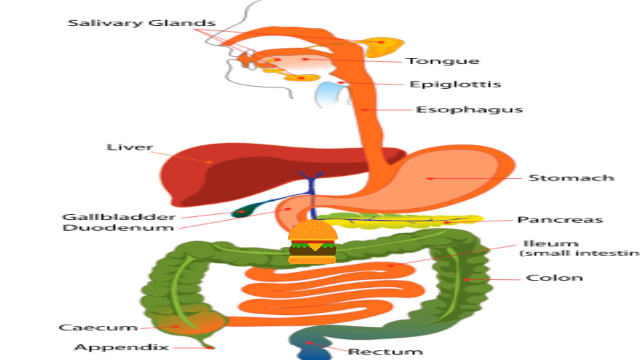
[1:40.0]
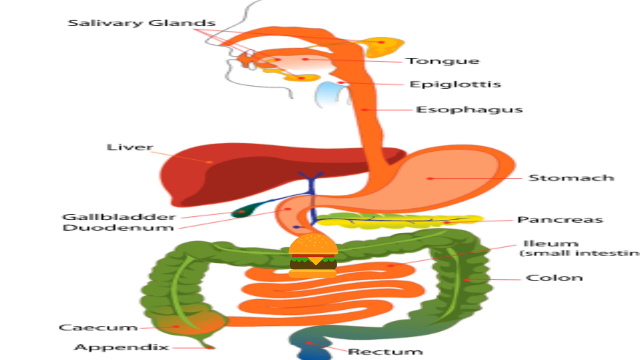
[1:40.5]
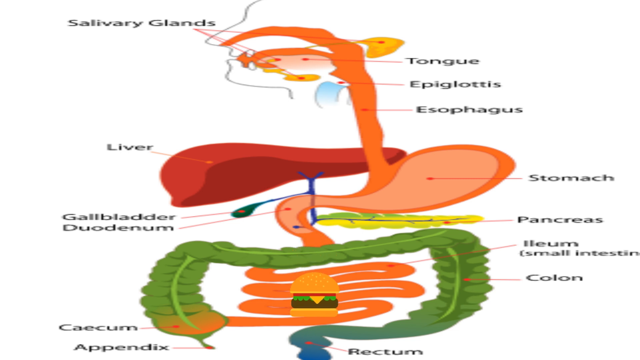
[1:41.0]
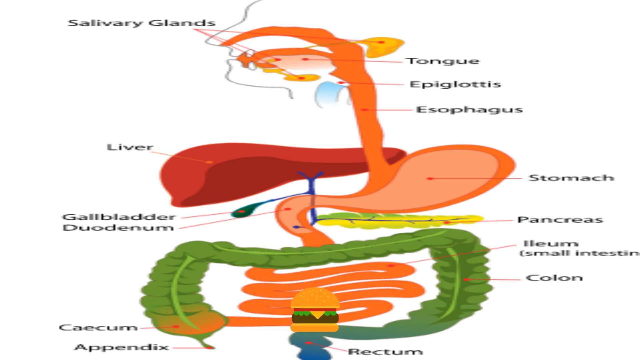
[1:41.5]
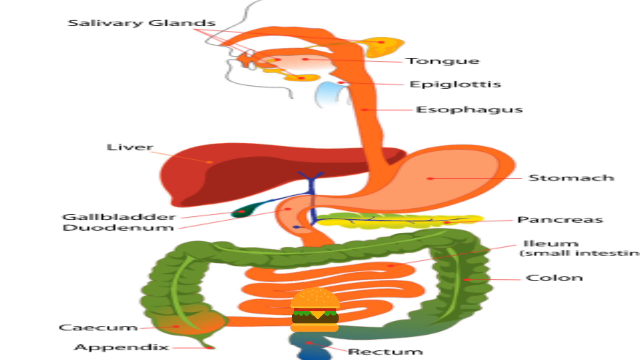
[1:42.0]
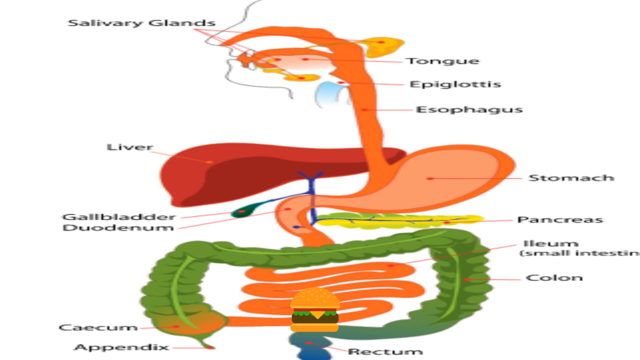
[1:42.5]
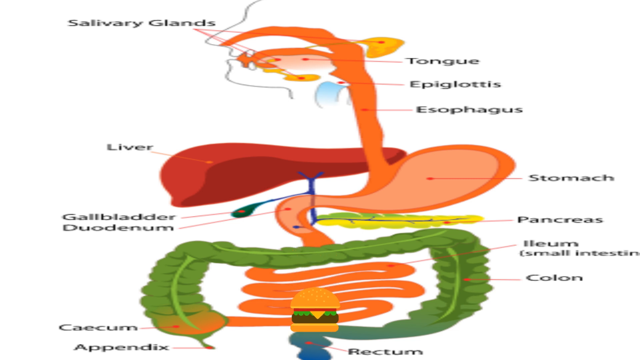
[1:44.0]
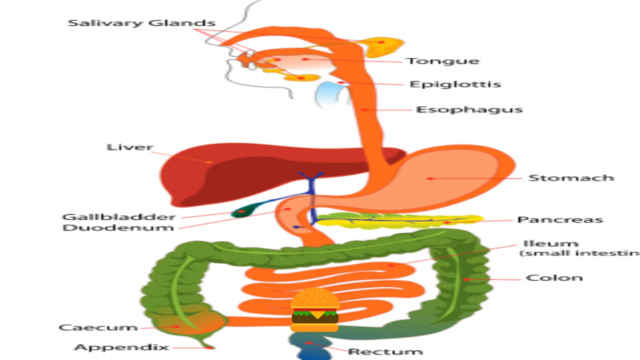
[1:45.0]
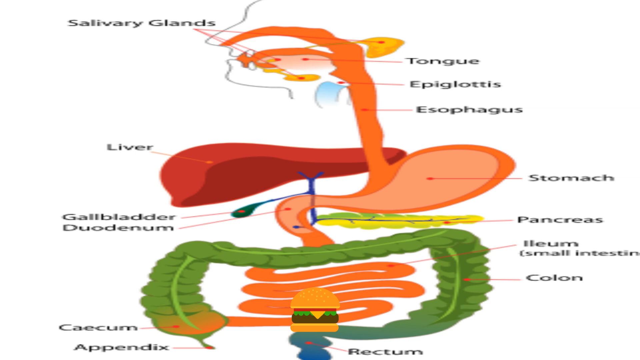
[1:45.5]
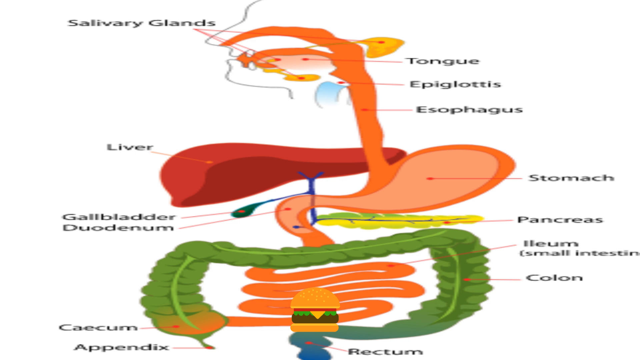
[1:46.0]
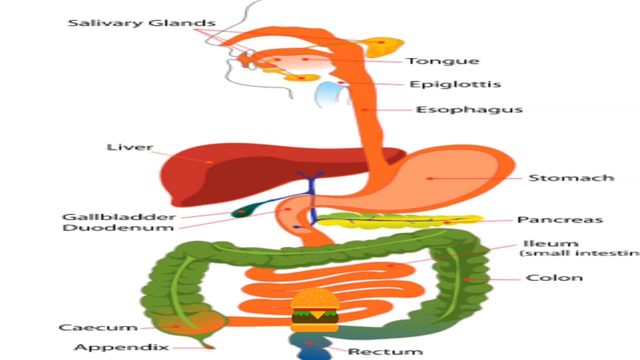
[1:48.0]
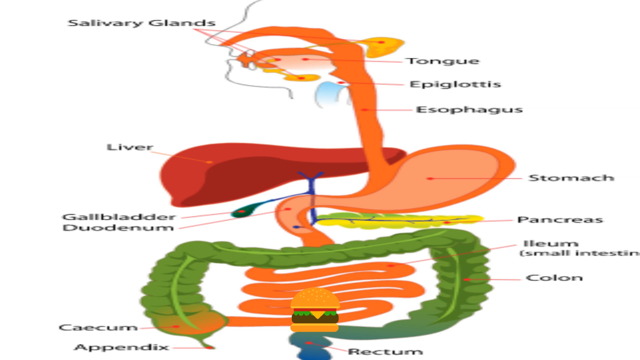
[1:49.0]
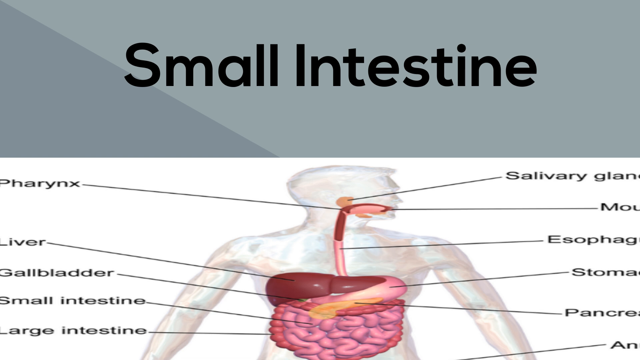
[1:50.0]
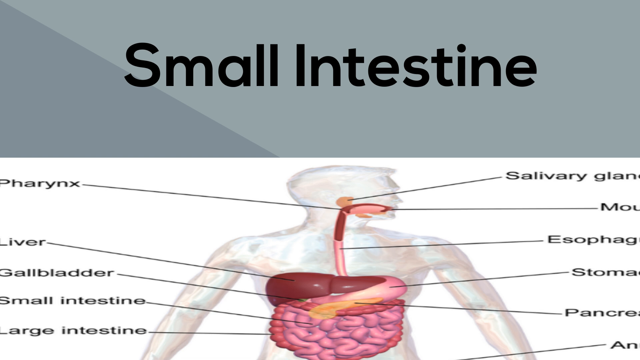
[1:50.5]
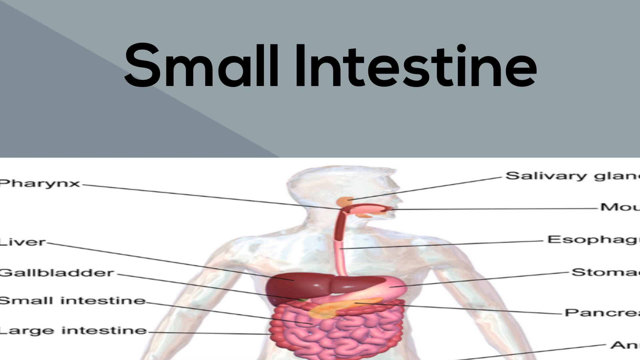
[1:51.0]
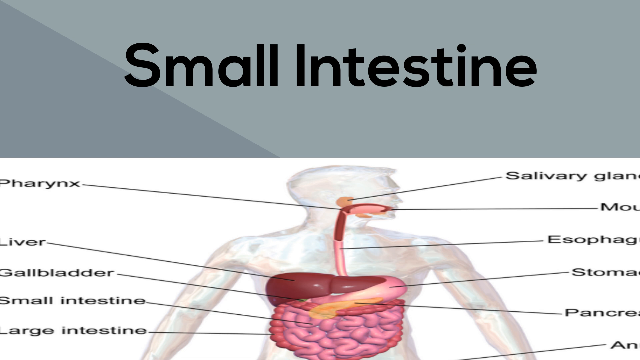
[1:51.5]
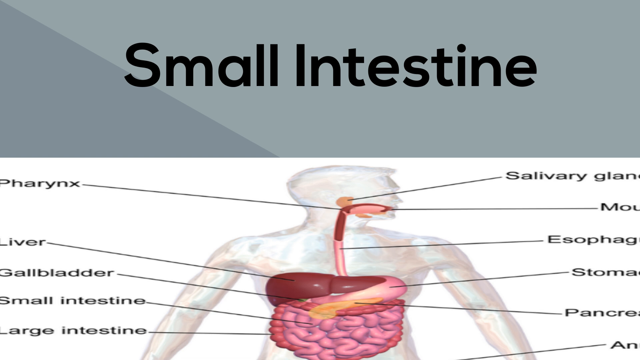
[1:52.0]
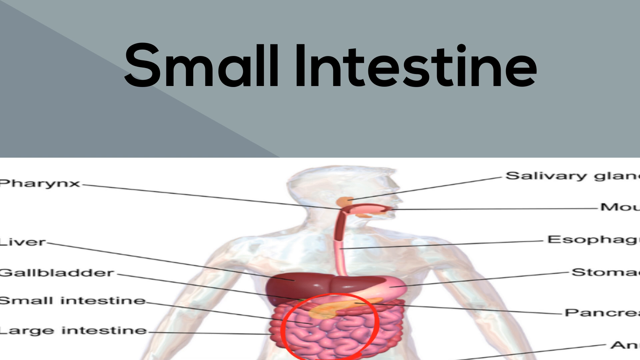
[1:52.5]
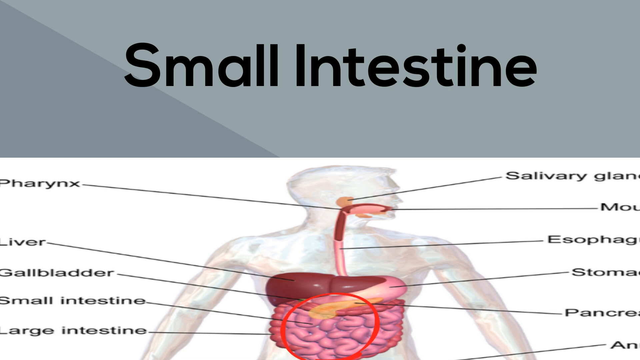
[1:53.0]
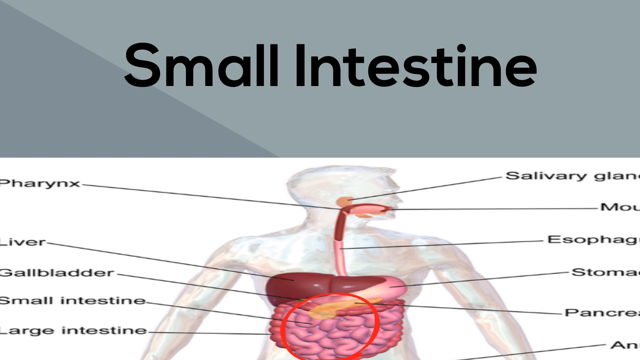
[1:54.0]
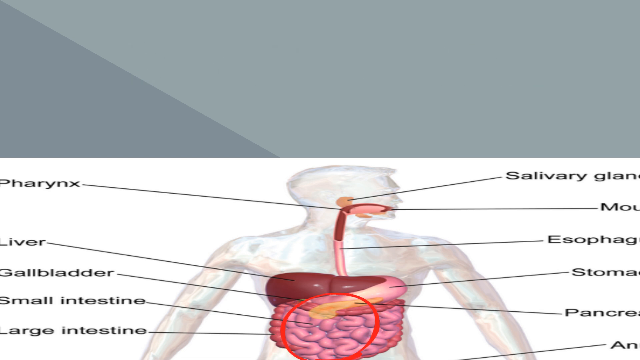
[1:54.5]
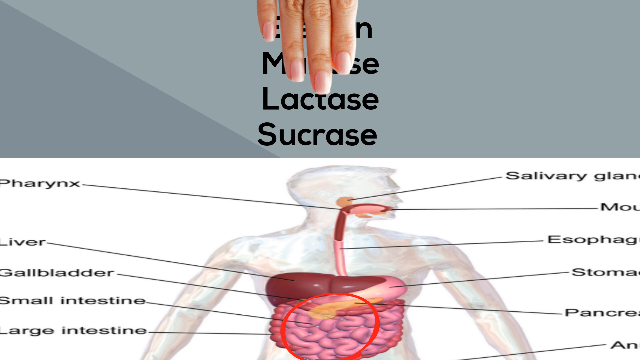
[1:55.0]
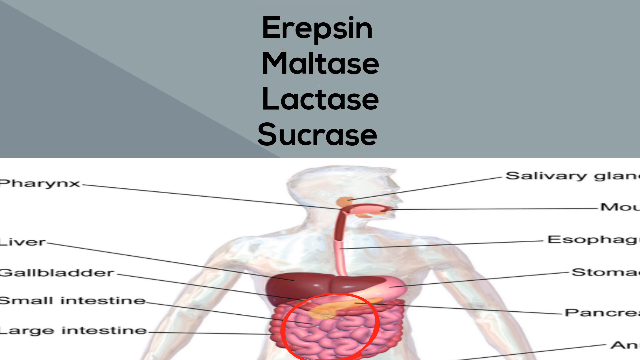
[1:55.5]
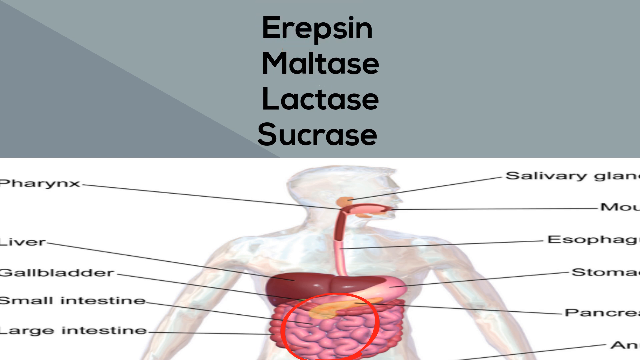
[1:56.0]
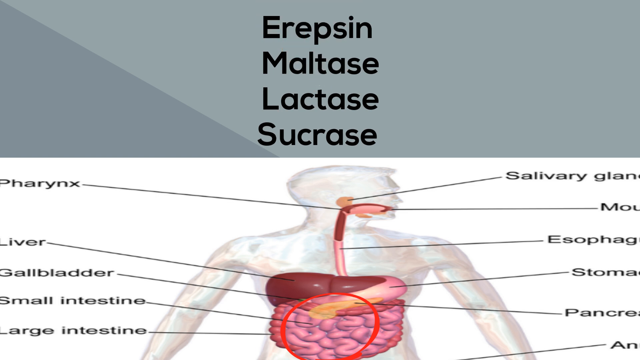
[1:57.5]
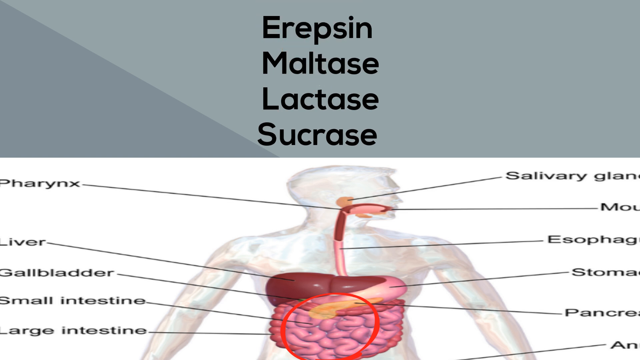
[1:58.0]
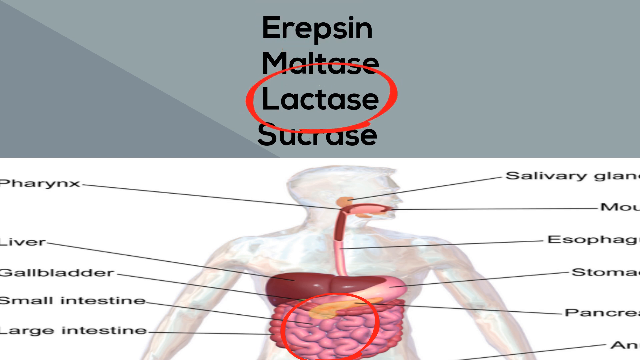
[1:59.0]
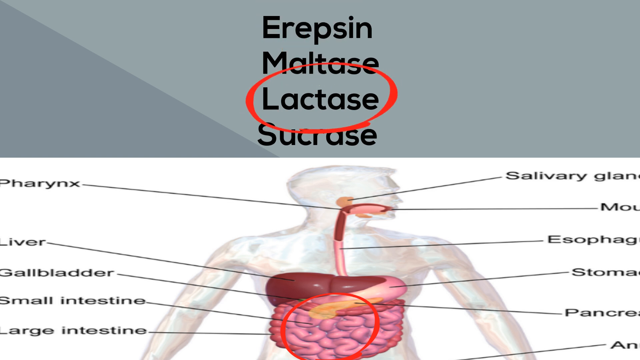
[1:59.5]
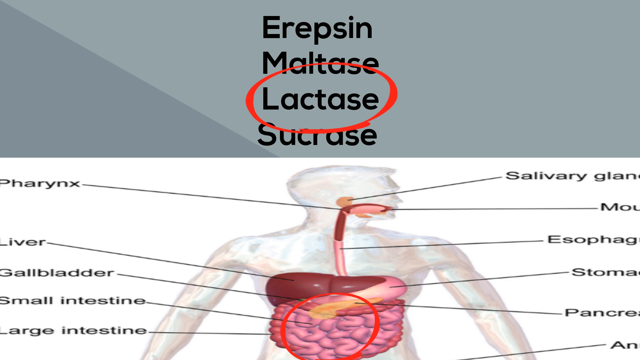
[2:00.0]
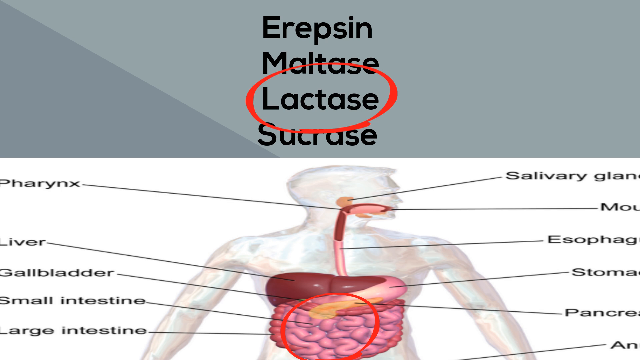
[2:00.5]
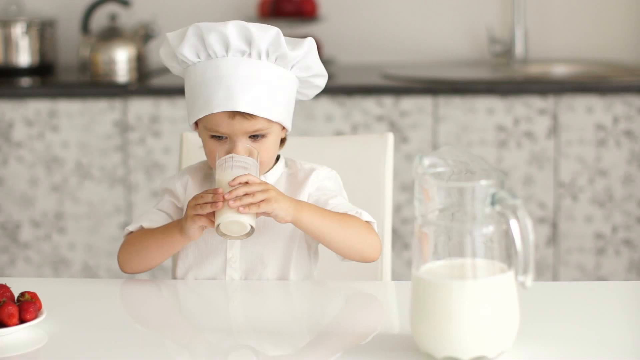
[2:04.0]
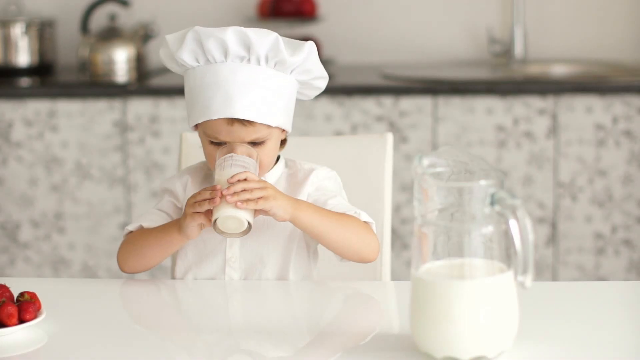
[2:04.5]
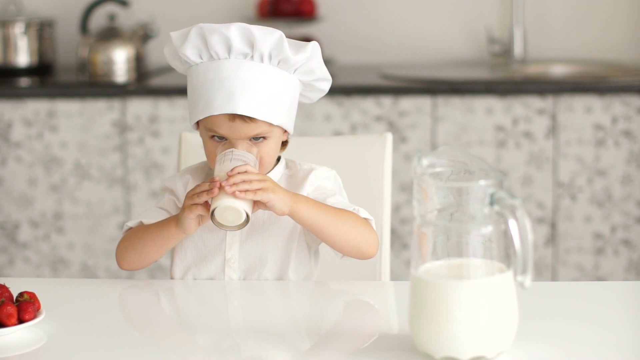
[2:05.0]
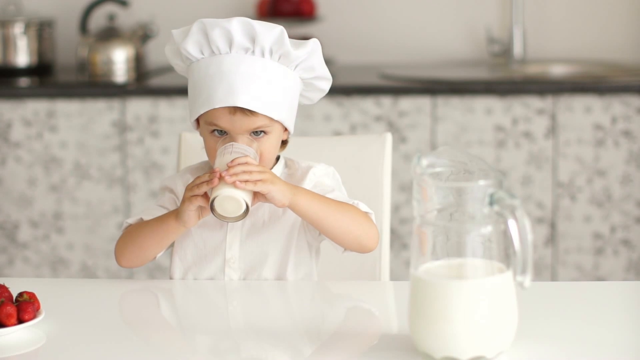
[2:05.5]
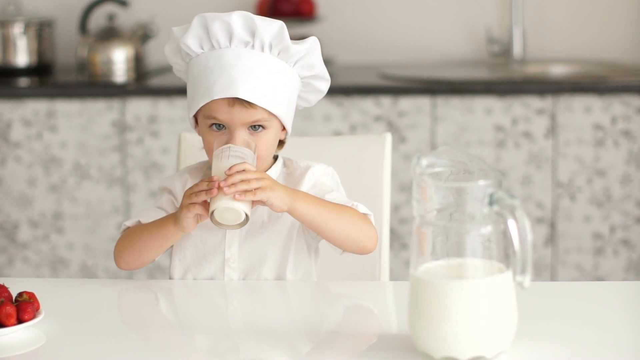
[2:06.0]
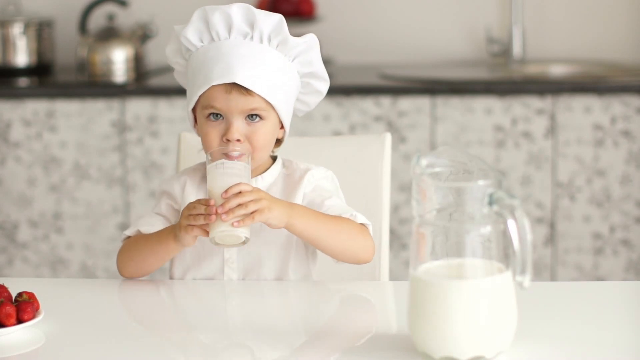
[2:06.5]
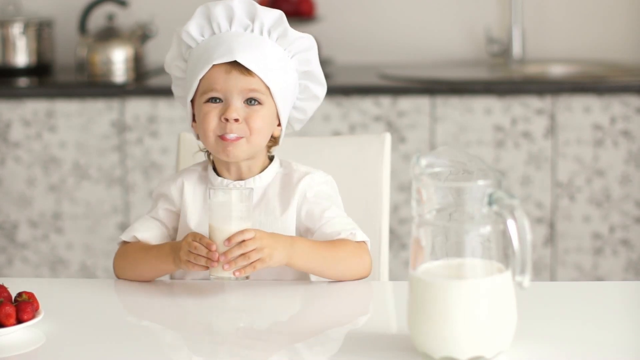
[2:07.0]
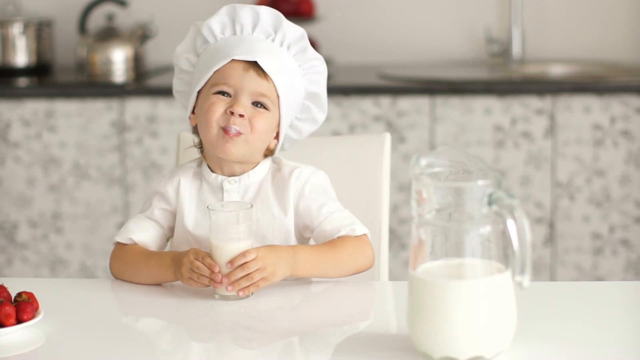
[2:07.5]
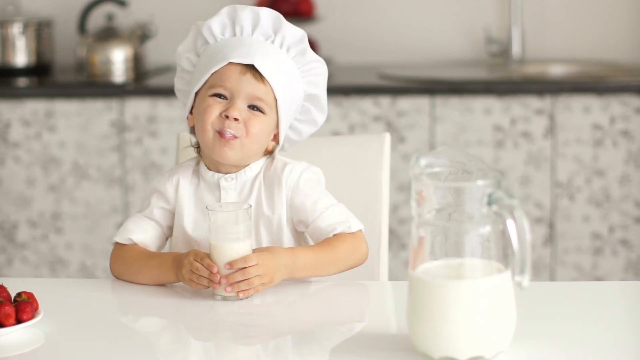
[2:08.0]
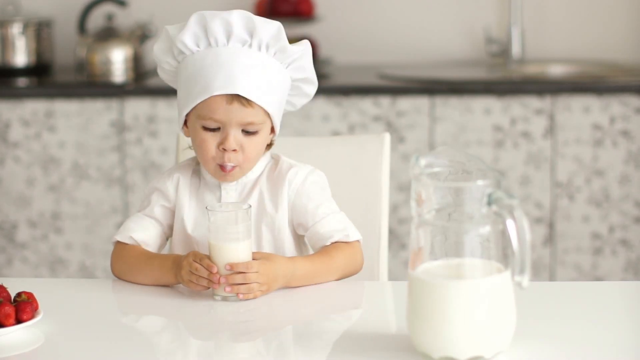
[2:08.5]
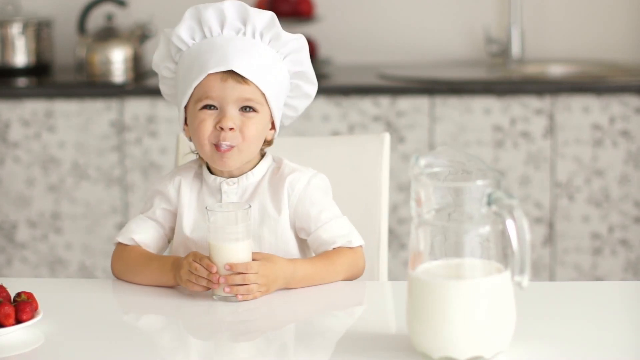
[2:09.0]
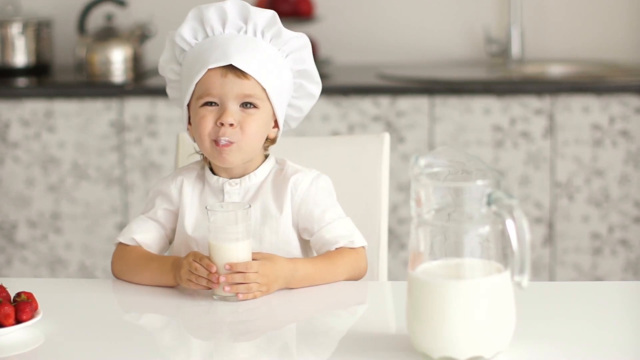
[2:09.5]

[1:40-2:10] A picture shows the path going down from the salivary glands down the throat to the small intestine, with labels including salivary glands, esophagus, stomach, pancreas, blood and small intestine. A child is shown drinking milk and smiling. The child is dressed in a white shirt, with a kitchen sink in the background, and then the child walks out.